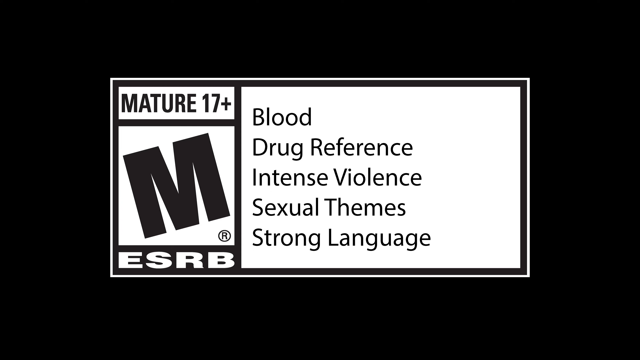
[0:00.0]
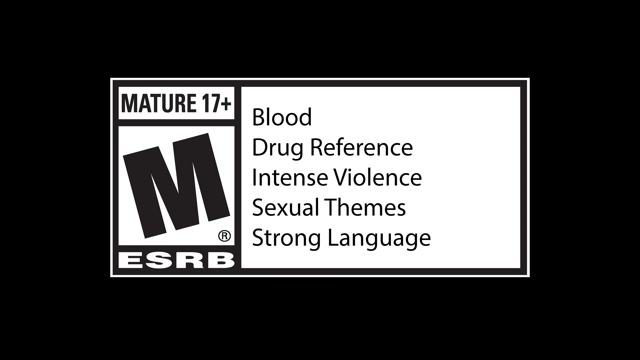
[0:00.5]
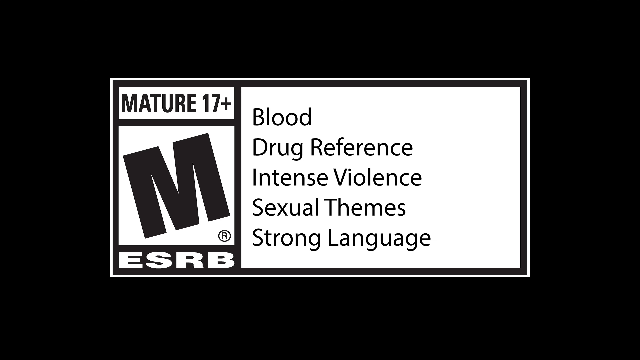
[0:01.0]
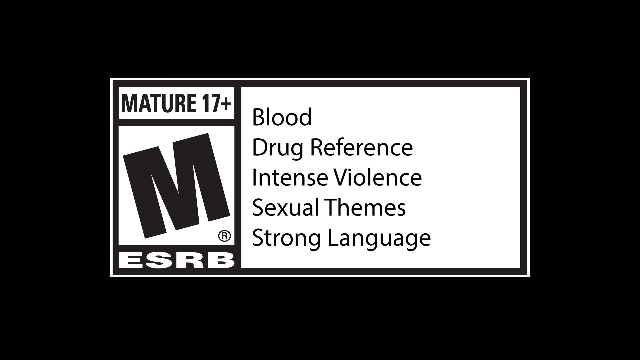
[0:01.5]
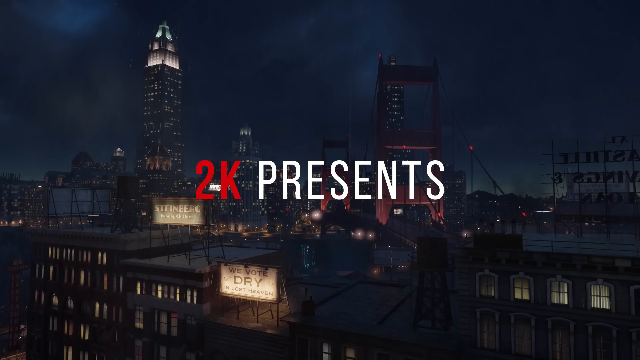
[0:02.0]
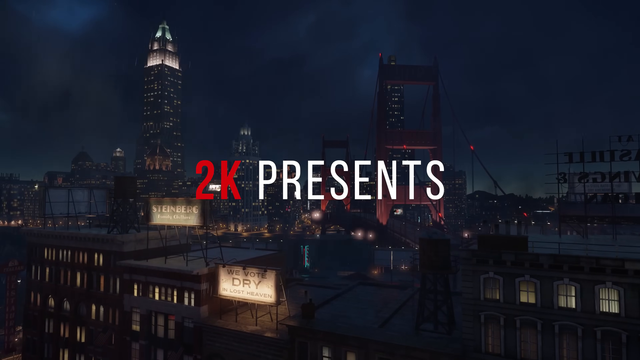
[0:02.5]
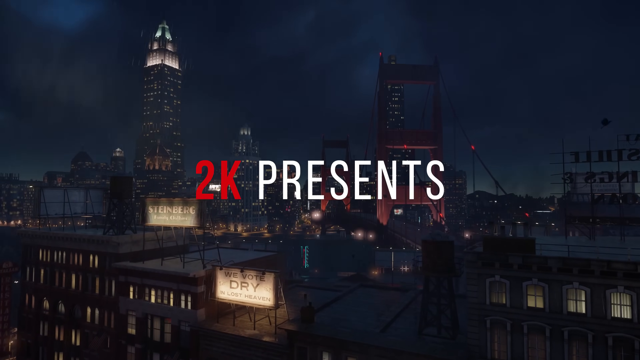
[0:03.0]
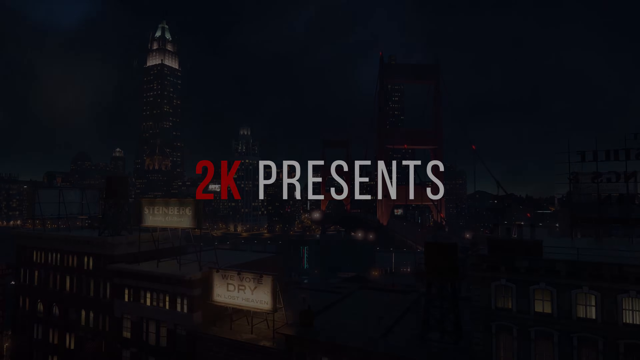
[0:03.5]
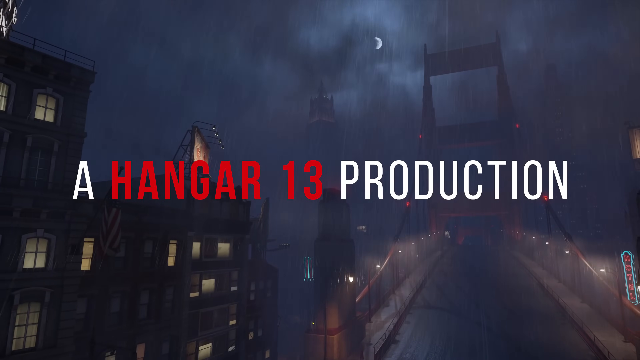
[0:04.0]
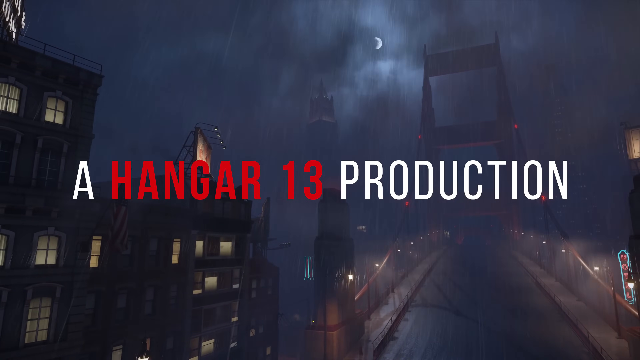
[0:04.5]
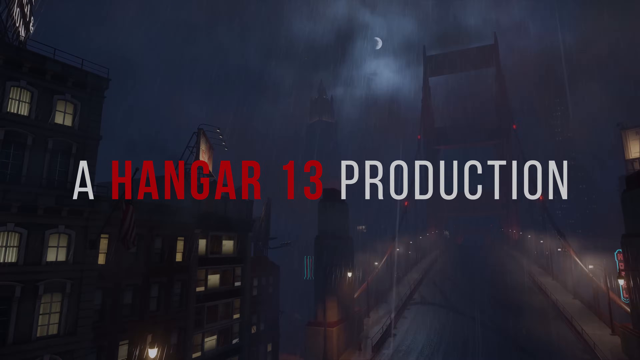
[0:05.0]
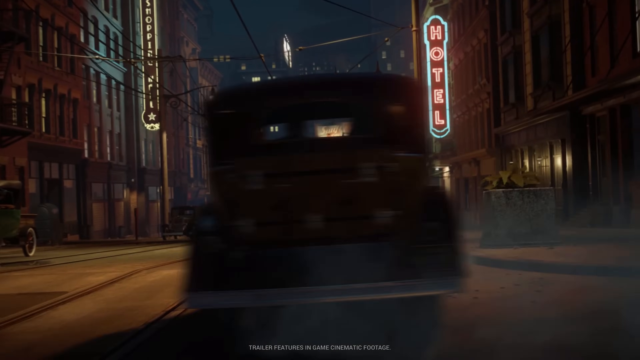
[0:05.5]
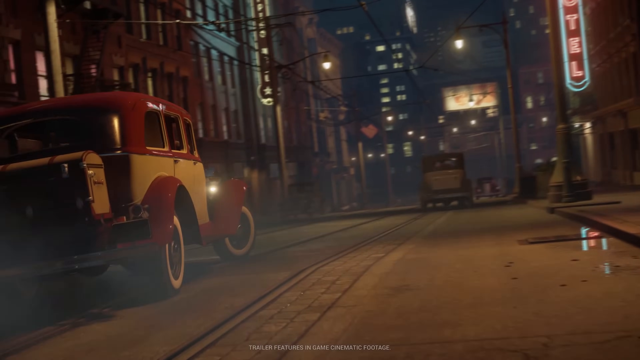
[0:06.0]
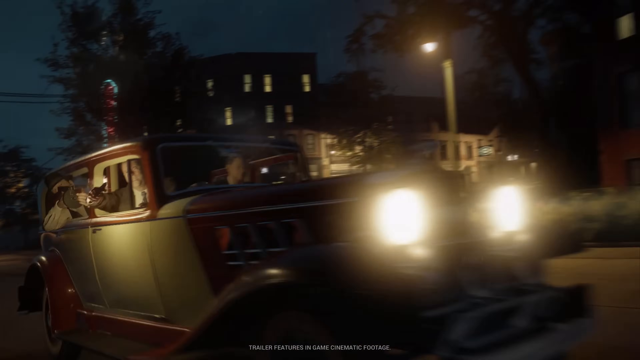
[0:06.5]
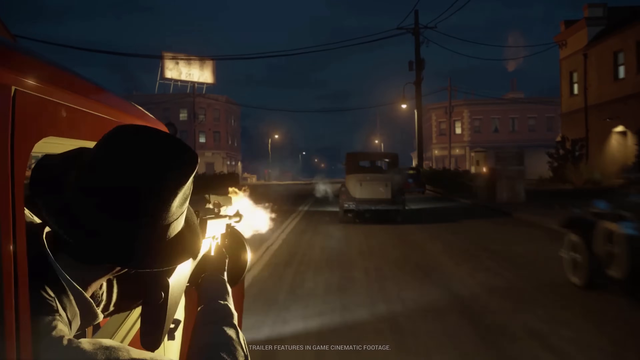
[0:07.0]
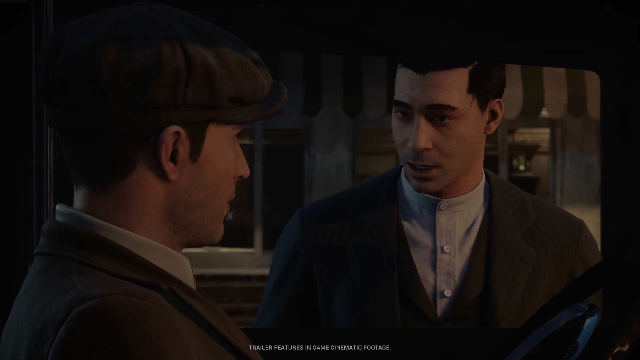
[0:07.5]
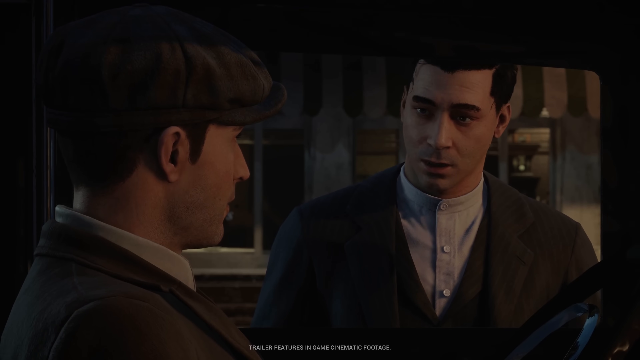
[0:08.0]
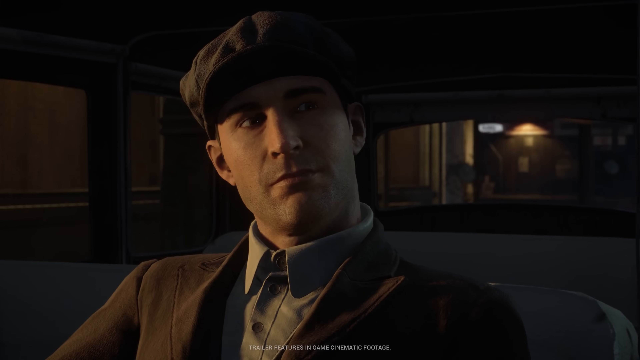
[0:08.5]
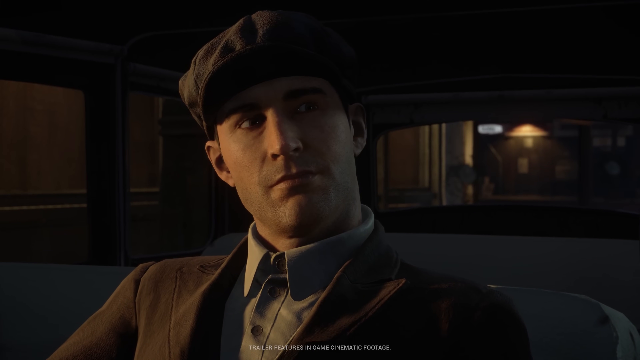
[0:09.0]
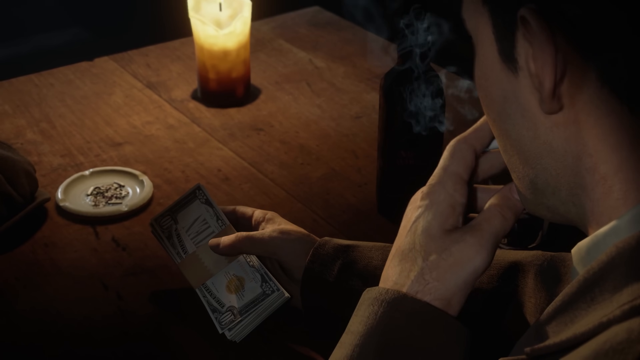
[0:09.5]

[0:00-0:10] The video opens on a black screen with a white box in the center containing an age rating description: the game is rated "Mature 17+" for blood, drug reference, intense violence, sexual themes and strong language. Next comes a city landscape at night, with the words "2K presents" in red and white lettering in the center of the screen. The following screen says "a Hangar 13 production". What appears to be gameplay follows: a quite realistic view of a city at night, with lots of lights on in the buildings and neon signs outside. An old-fashioned car that seems to be red and yellow, or maybe red and white, drives up the street on what are possibly tram lines, and somebody seems to be shooting out of the window. The scene cuts to two men inside a vehicle, talking to each other quite earnestly; their clothing looks quite old-fashioned, suggesting the setting is some time in the past.